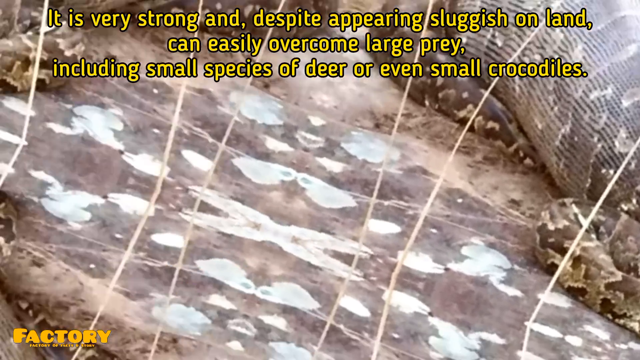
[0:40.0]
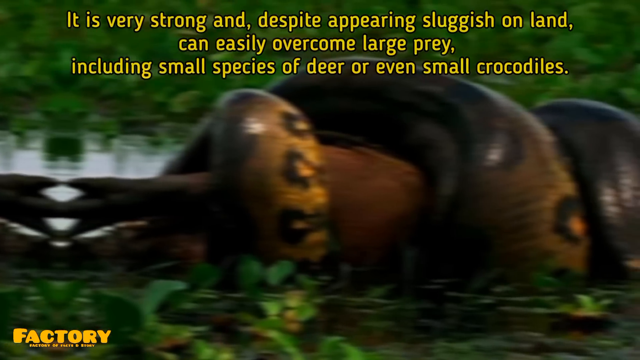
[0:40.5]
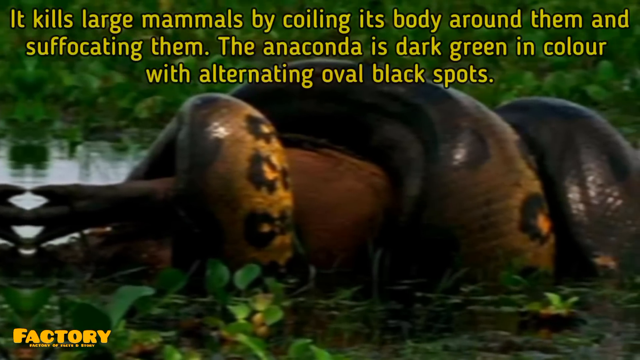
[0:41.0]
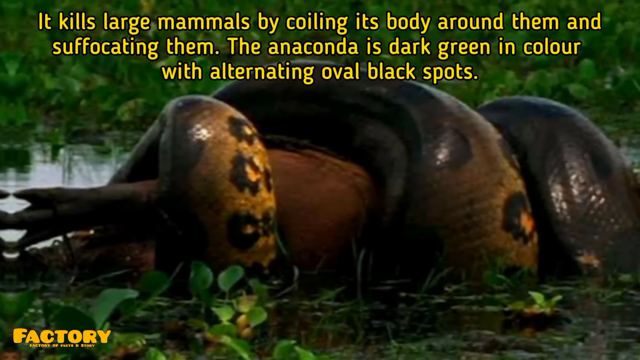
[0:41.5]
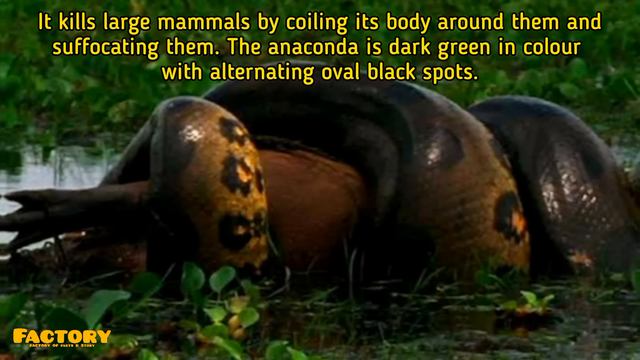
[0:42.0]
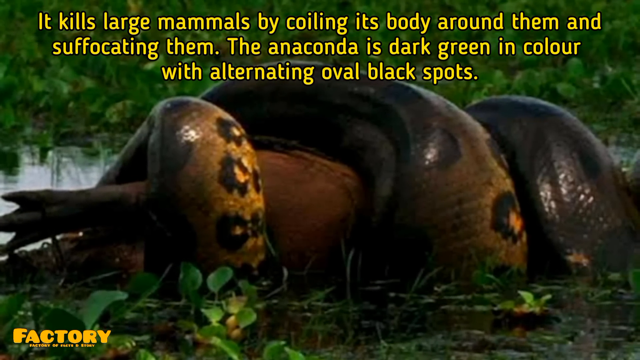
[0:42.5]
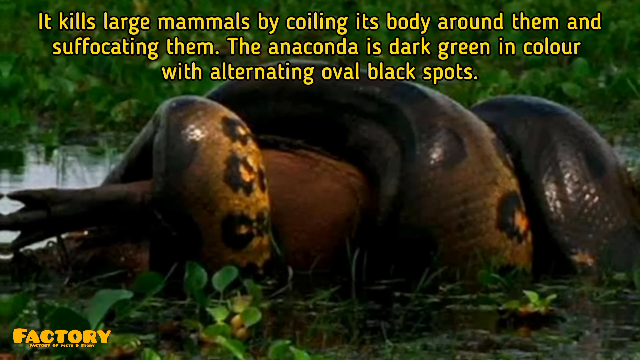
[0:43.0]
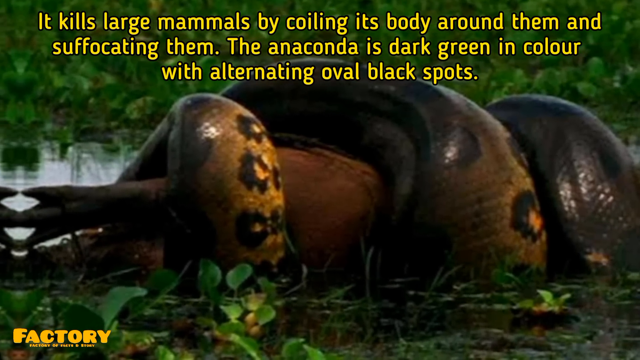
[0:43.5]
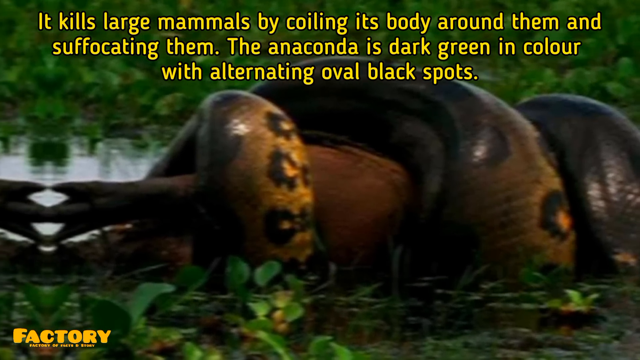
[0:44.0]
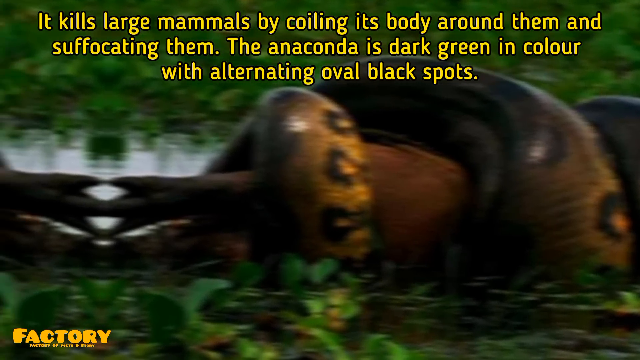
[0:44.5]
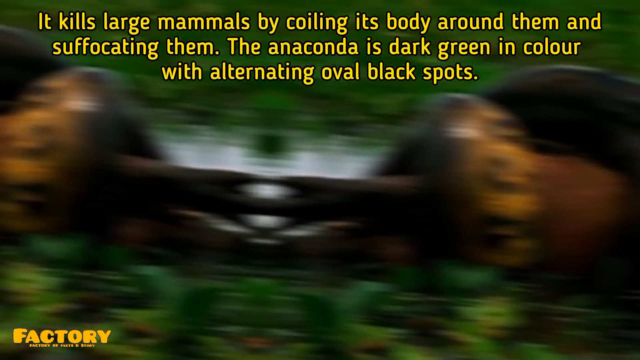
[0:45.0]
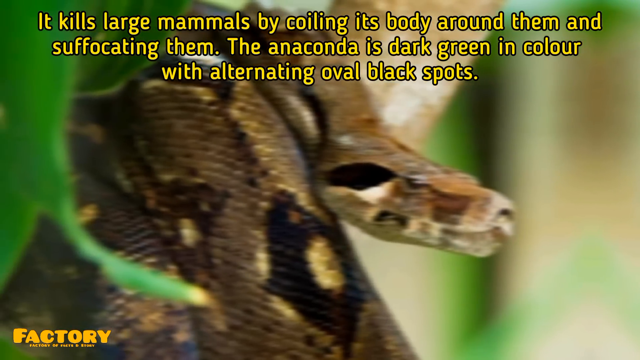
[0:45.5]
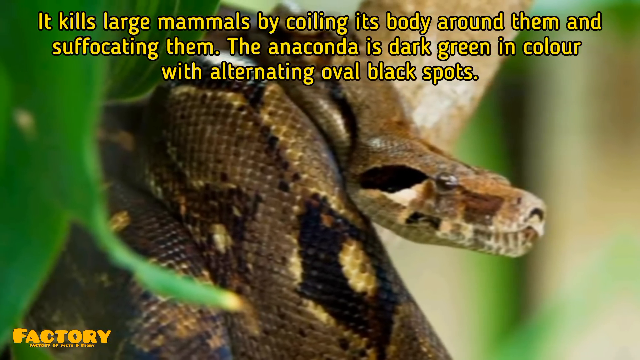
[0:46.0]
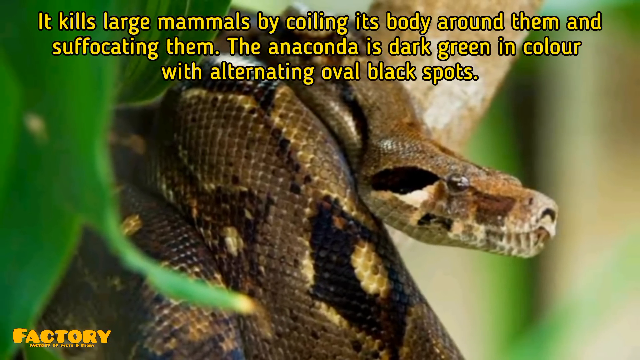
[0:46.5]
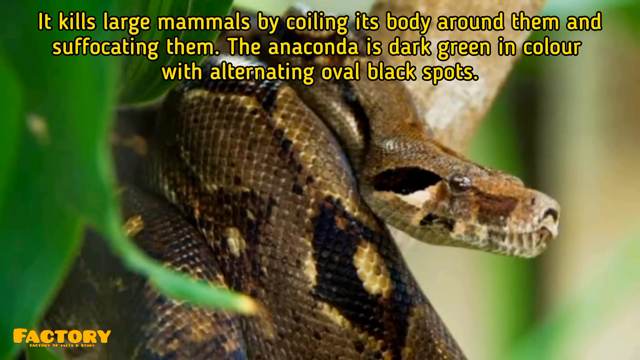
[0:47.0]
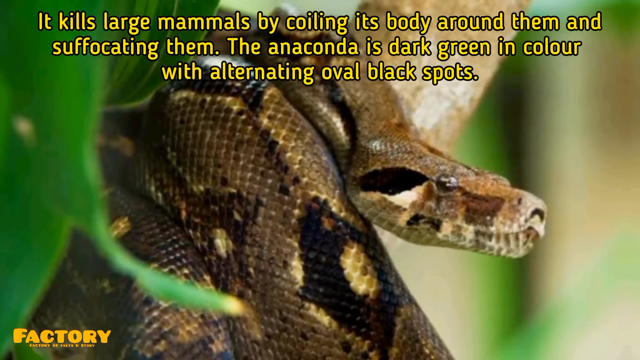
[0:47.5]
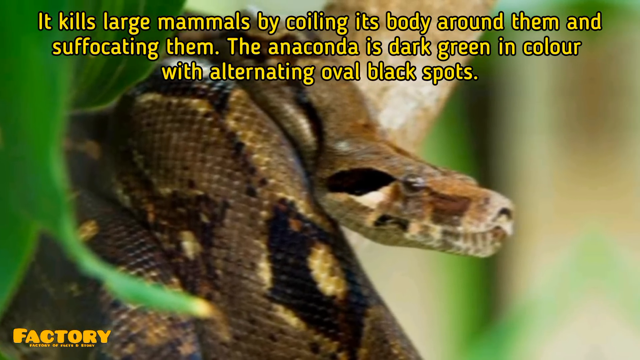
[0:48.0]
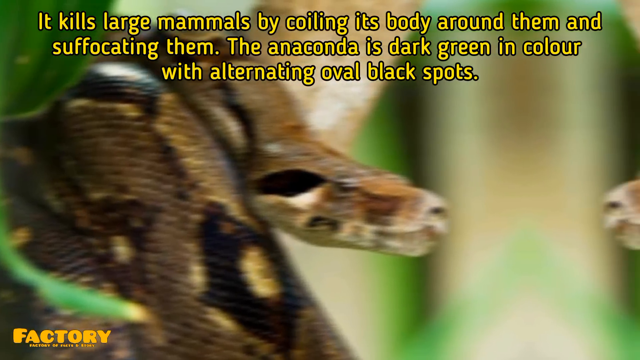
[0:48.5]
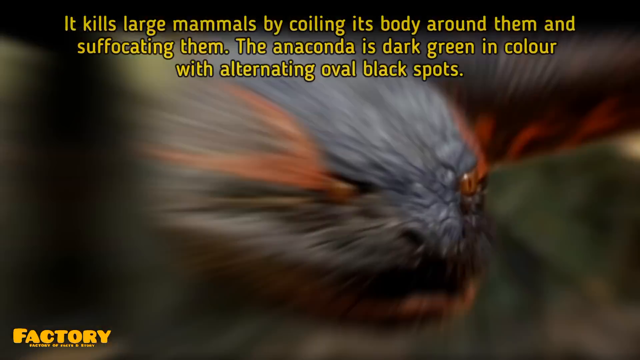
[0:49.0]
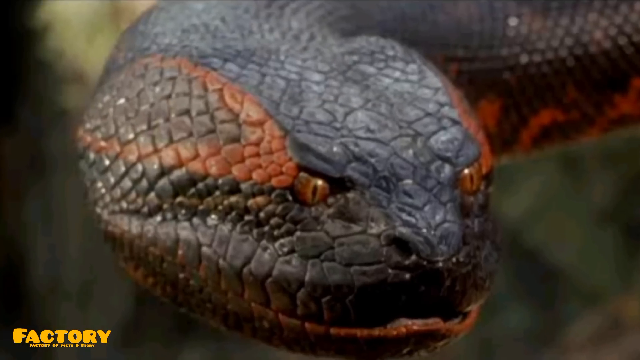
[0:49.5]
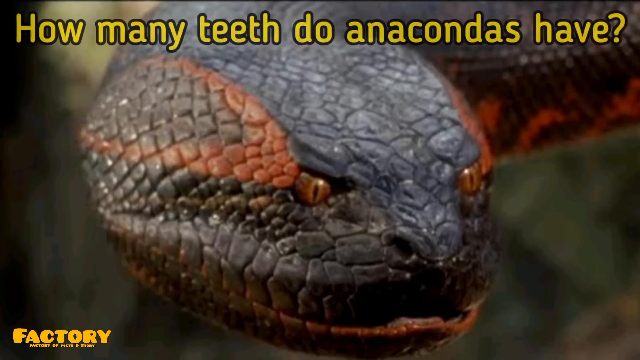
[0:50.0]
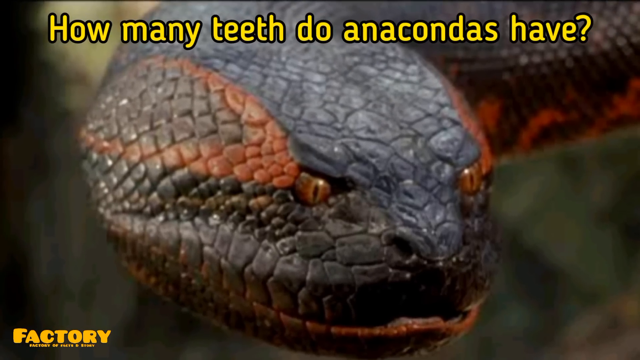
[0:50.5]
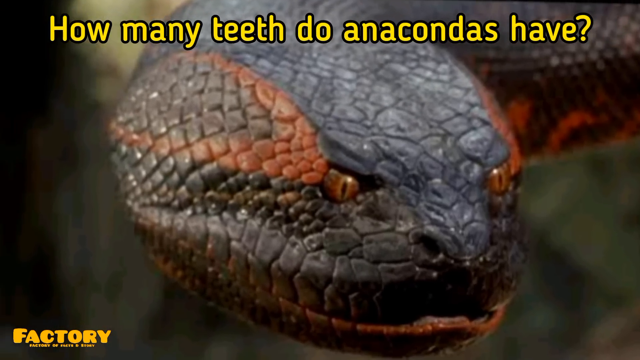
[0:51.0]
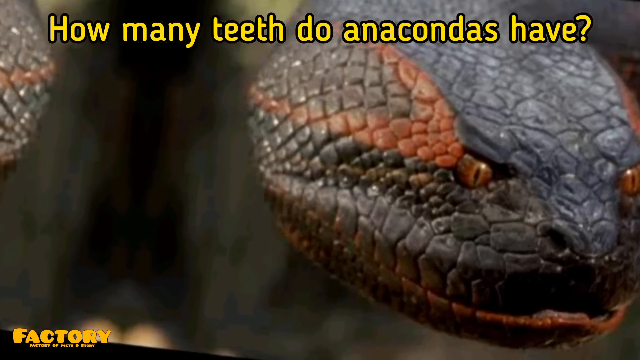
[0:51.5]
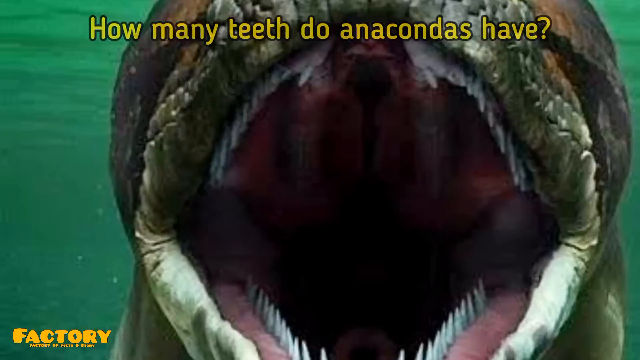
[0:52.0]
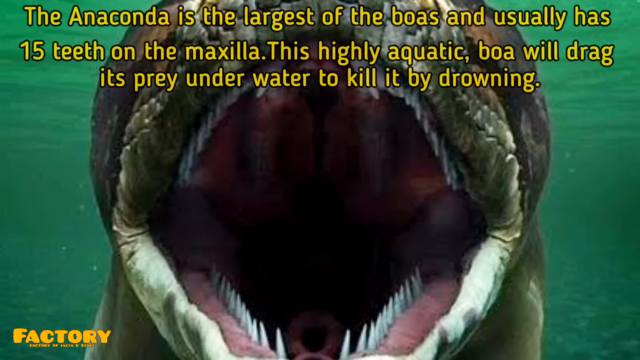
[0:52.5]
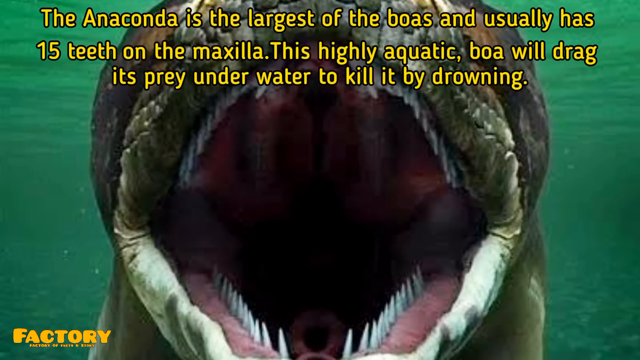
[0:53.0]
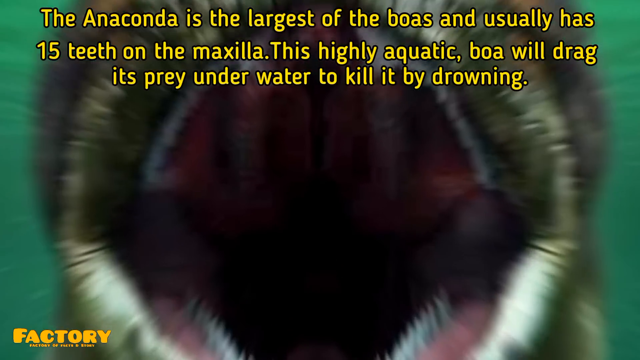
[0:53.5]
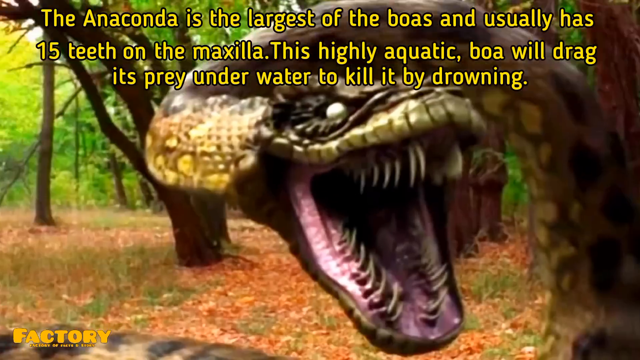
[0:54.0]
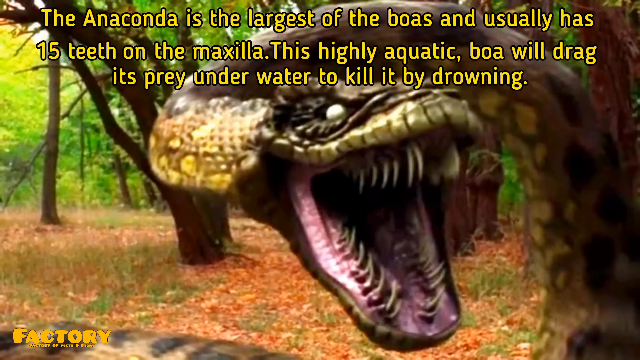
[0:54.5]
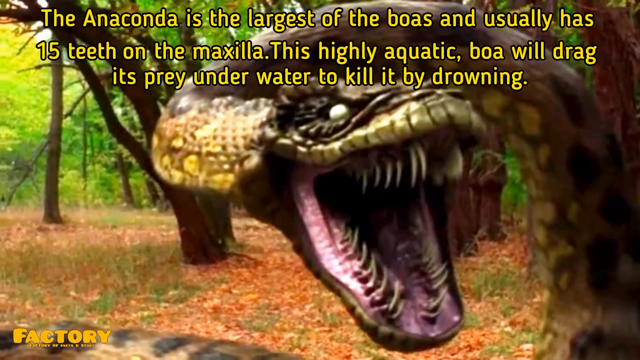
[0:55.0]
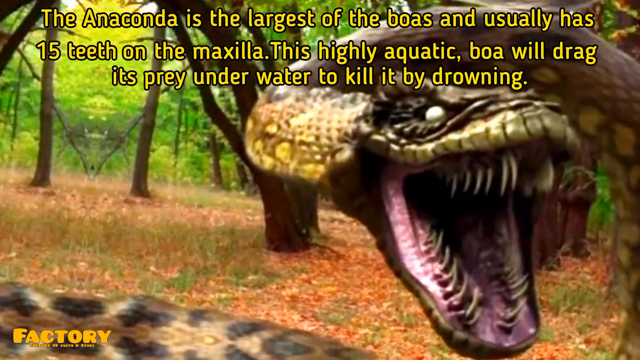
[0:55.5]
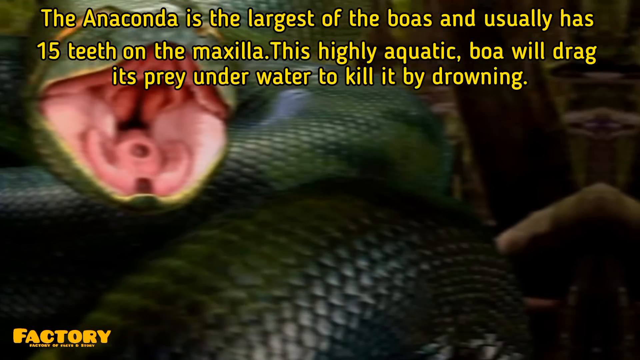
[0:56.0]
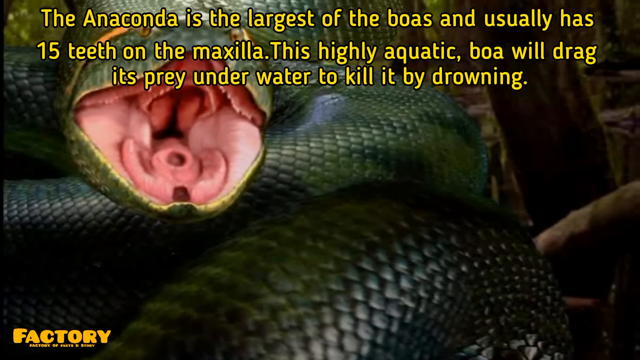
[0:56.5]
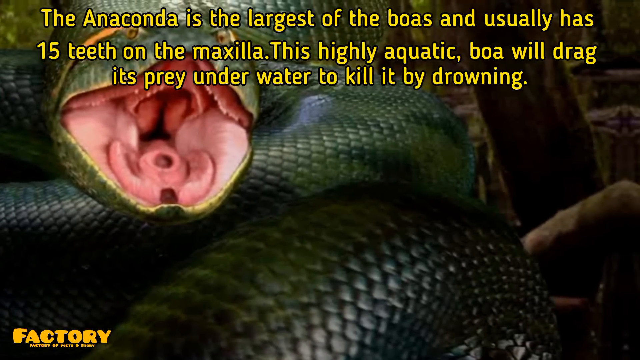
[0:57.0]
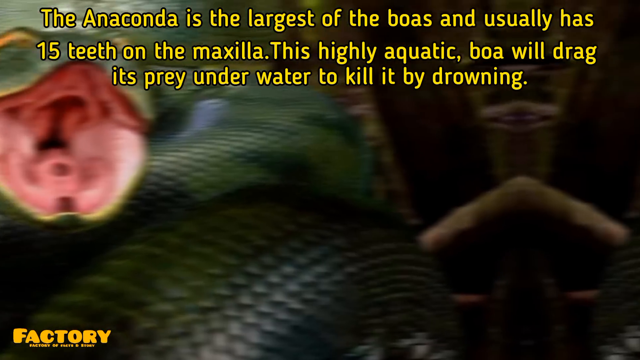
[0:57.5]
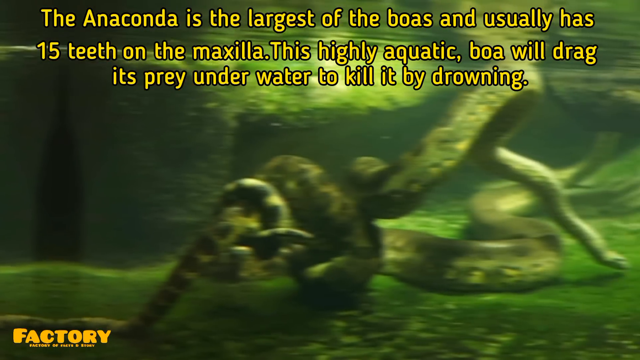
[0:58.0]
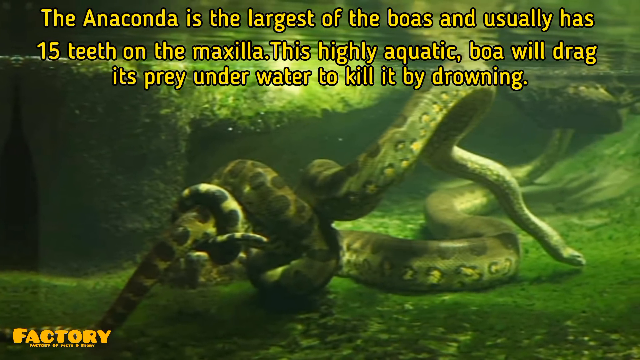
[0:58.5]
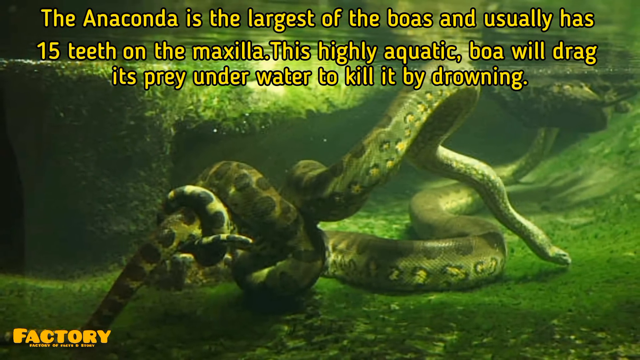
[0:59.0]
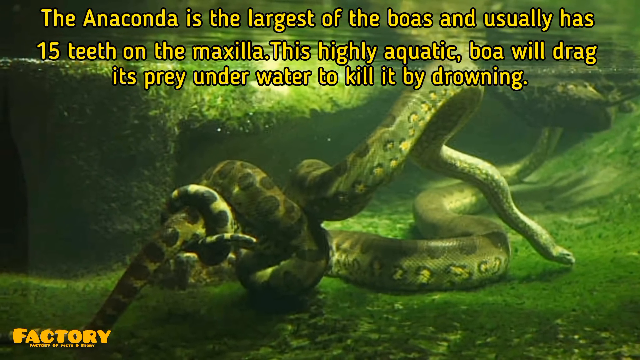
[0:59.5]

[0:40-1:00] A close-up shows an anaconda wrapping itself around some type of large animal on top of a swampy lake area, with green plants all around it. The anaconda is very brownish with black spots. Yellow text at the top of the video describes how it kills mammals "by coiling its body around them and suffocating them. The anaconda is dark green in color with alternating oval black spots." The scene switches to a close-up of an anaconda's face on top of a tree, looking to the right, and then to a very close-up shot of a black anaconda's face looking very menacing. The text at the top now reads "how many teeth do anacondas have?" The scene changes to an underwater anaconda with its mouth wide open, and the yellow text changes to "The anaconda is the largest of the boas and usually has 15 teeth on the maxilla. The highly aquatic boa will drag its prey underwater to kill it by drowning." Next comes a very scary shot of an anaconda with very sharp teeth on a tree, then another anaconda with its mouth open that is toothless. The final scene shows an underwater anaconda.